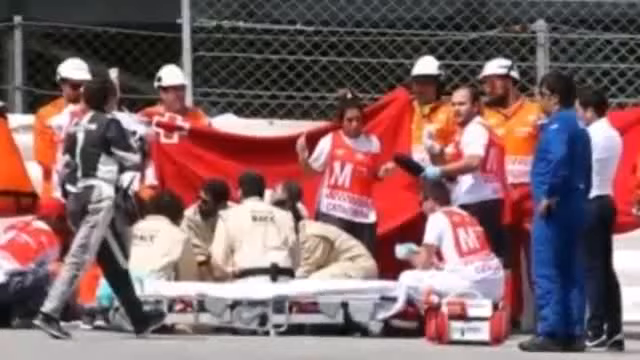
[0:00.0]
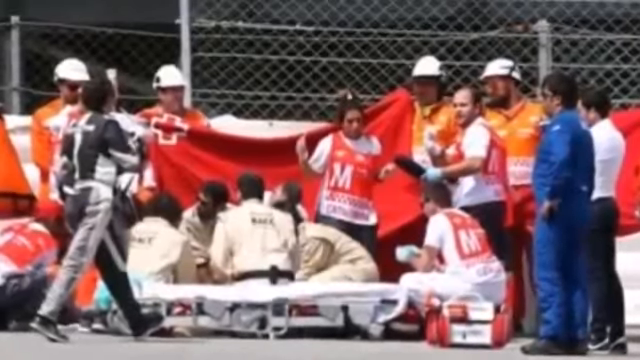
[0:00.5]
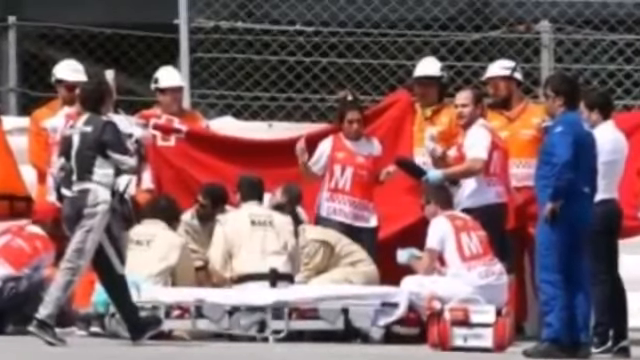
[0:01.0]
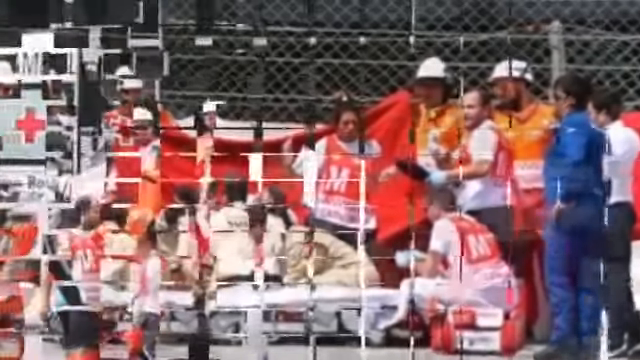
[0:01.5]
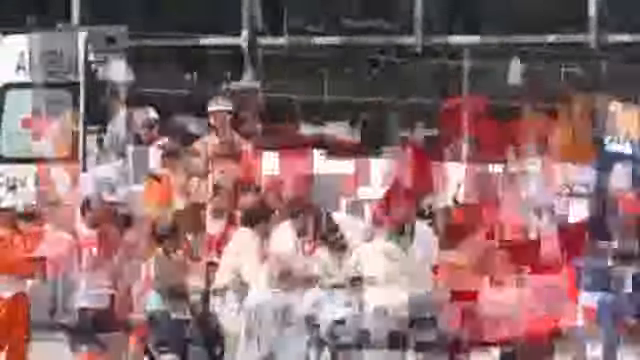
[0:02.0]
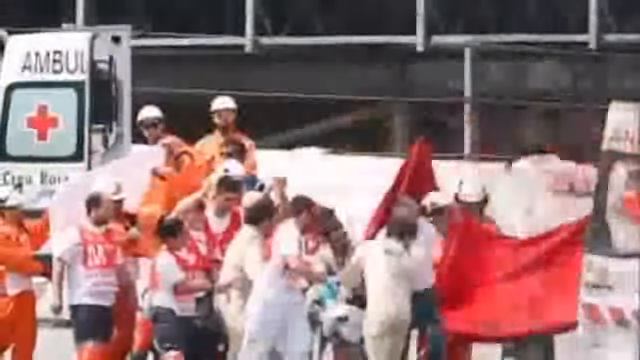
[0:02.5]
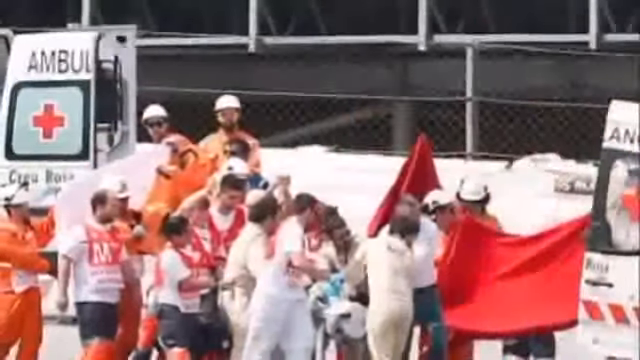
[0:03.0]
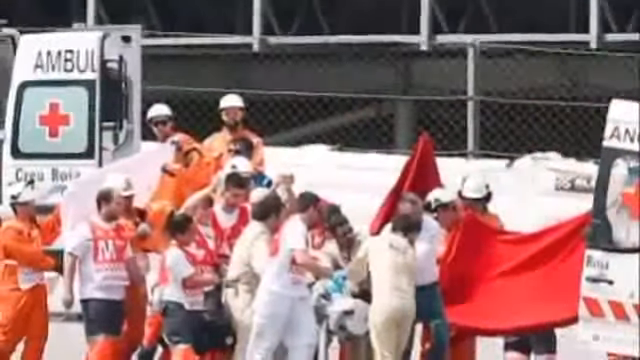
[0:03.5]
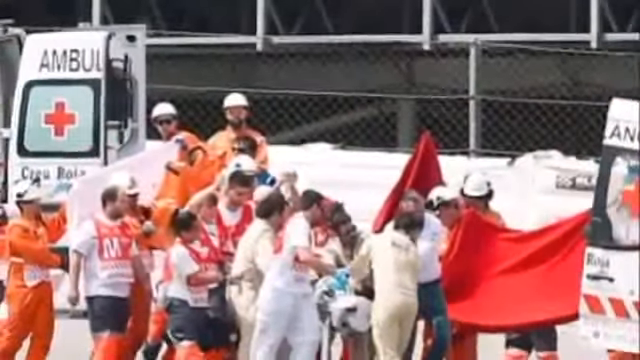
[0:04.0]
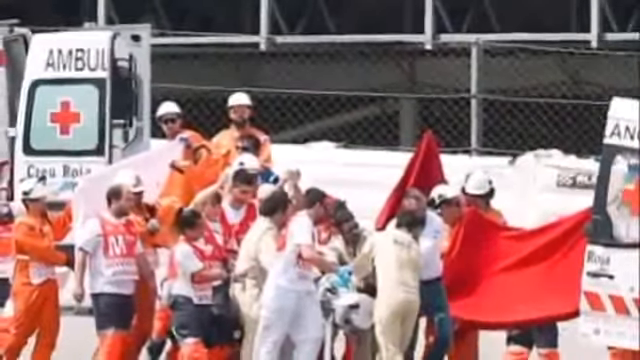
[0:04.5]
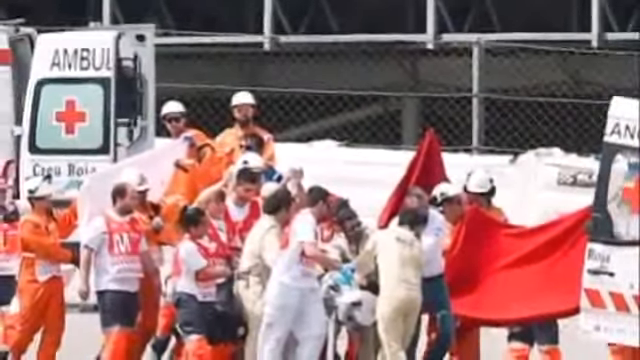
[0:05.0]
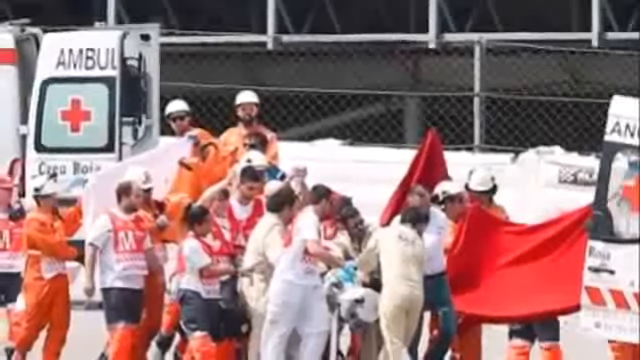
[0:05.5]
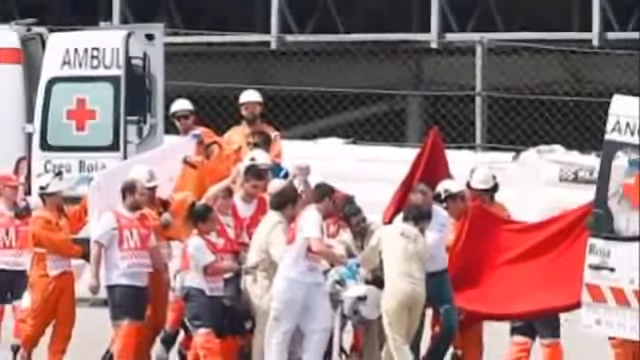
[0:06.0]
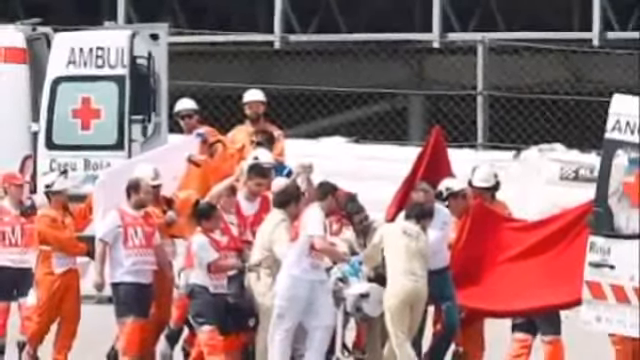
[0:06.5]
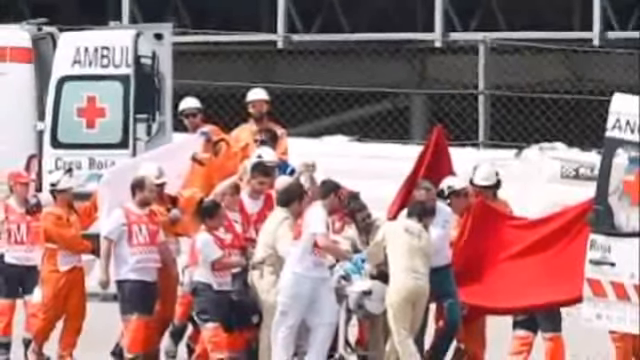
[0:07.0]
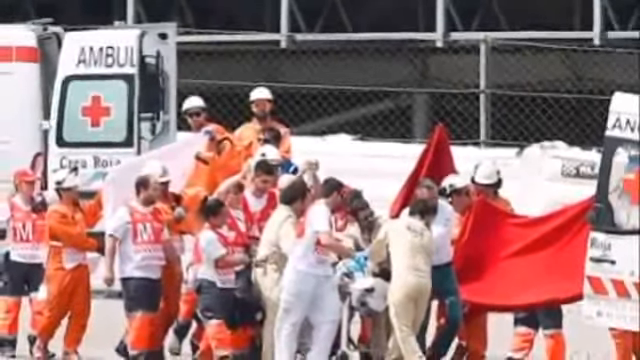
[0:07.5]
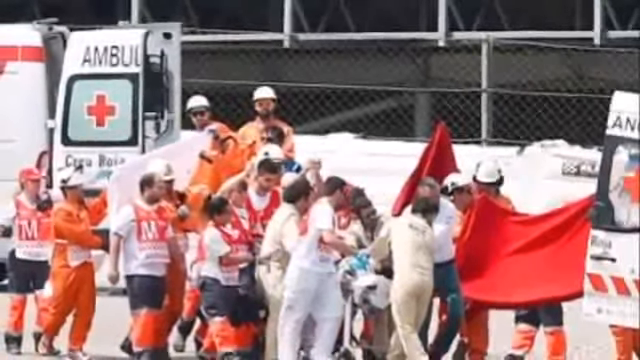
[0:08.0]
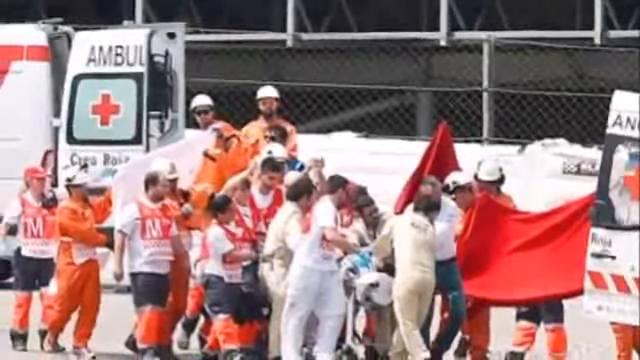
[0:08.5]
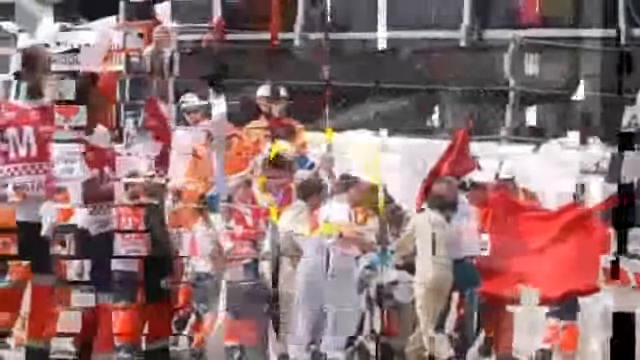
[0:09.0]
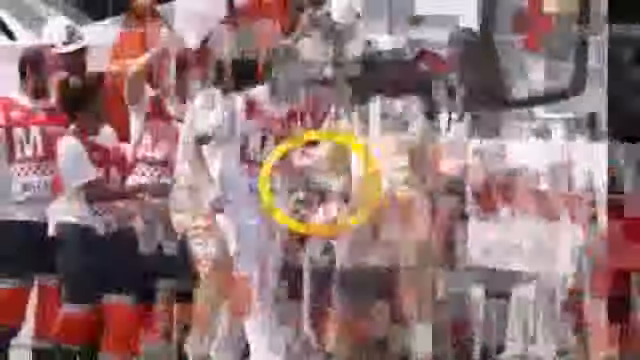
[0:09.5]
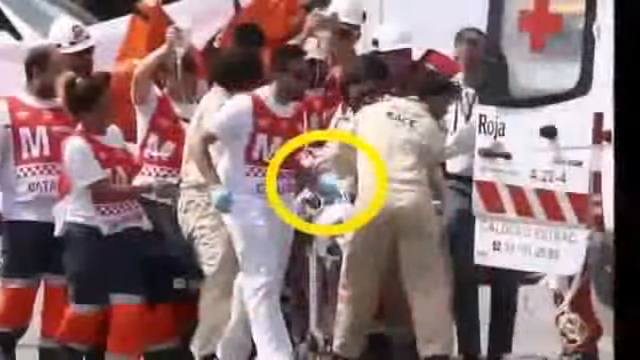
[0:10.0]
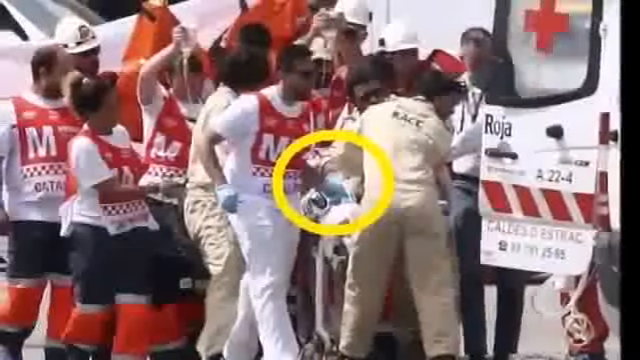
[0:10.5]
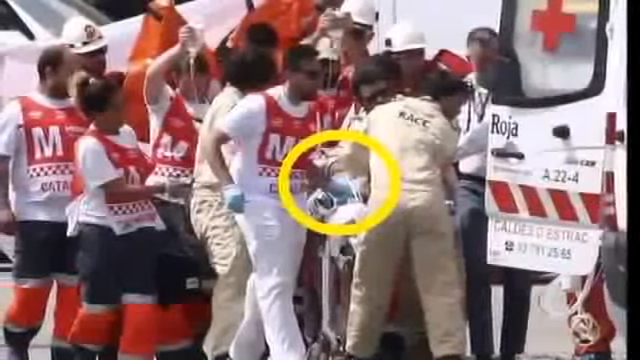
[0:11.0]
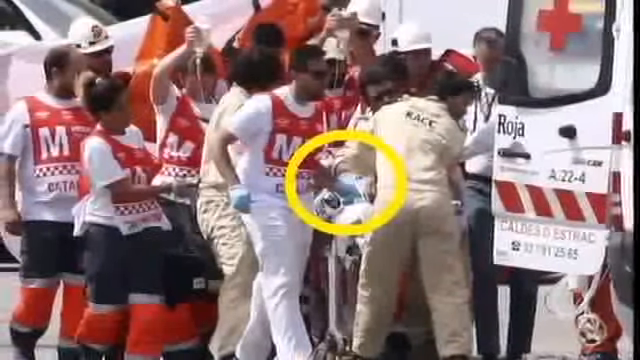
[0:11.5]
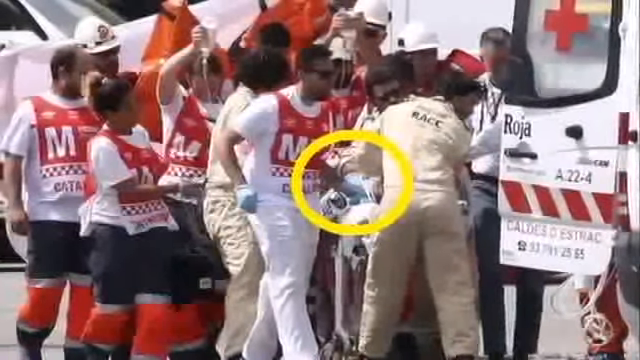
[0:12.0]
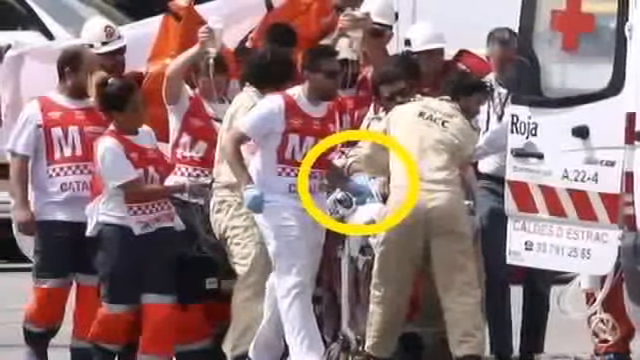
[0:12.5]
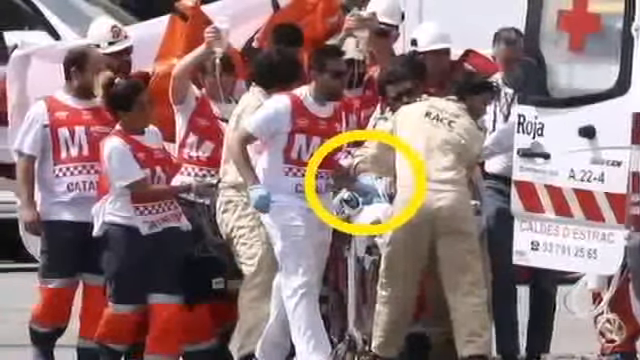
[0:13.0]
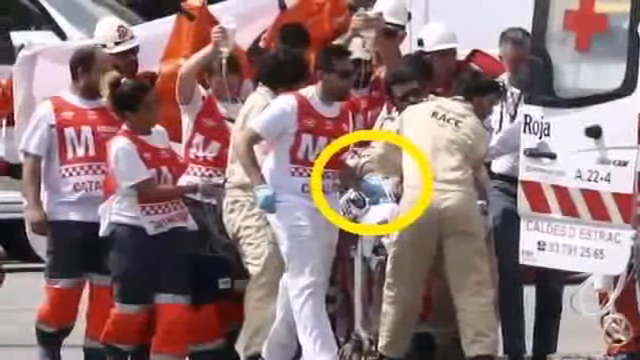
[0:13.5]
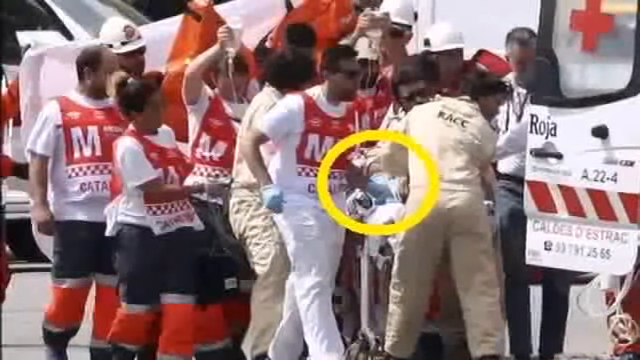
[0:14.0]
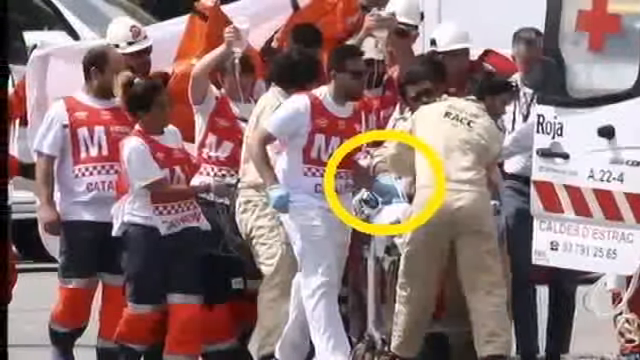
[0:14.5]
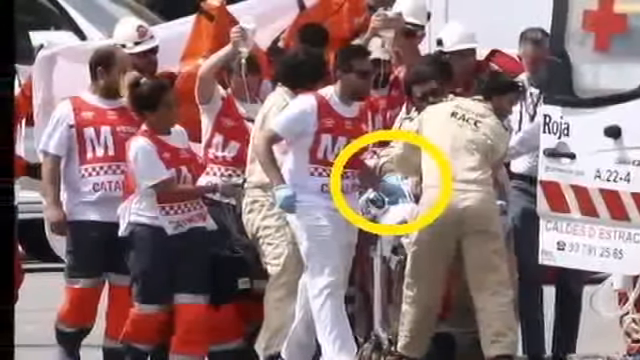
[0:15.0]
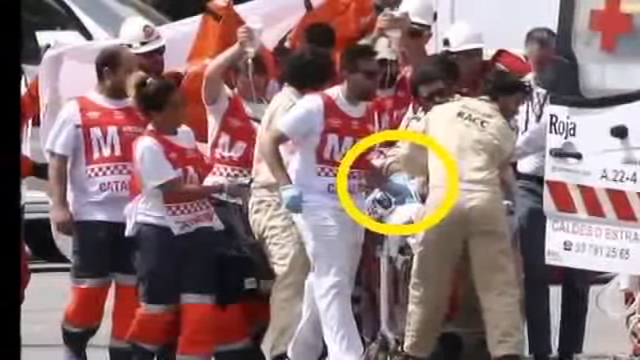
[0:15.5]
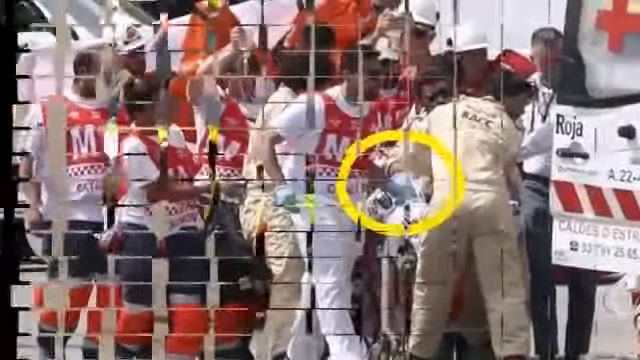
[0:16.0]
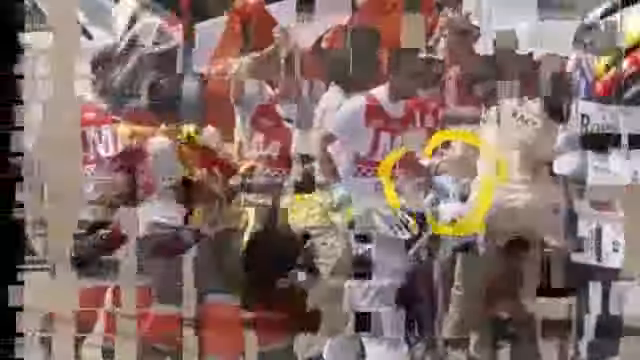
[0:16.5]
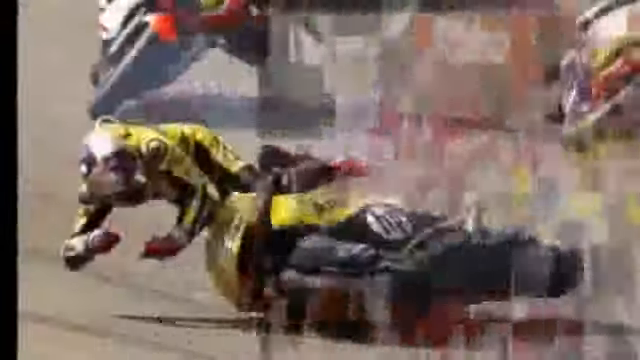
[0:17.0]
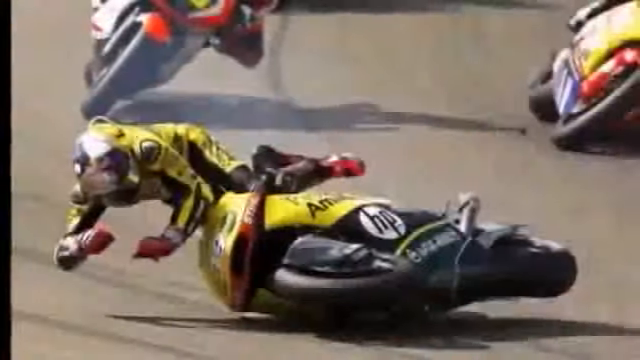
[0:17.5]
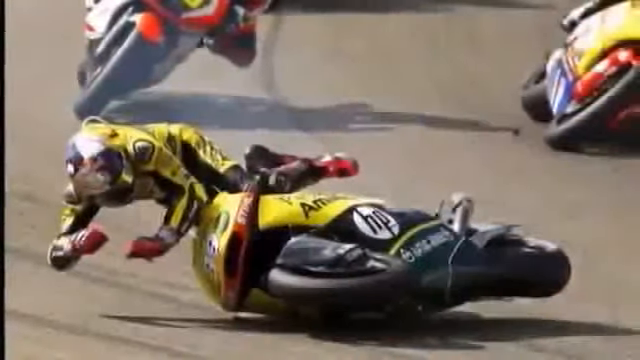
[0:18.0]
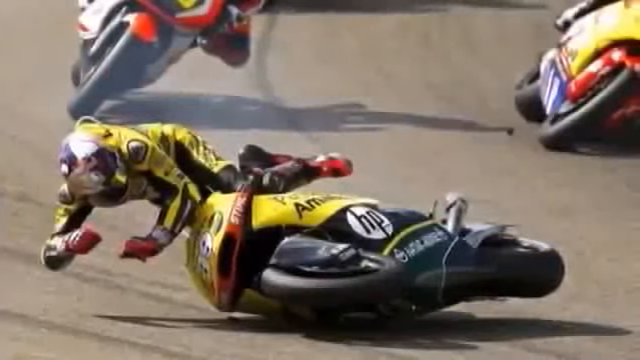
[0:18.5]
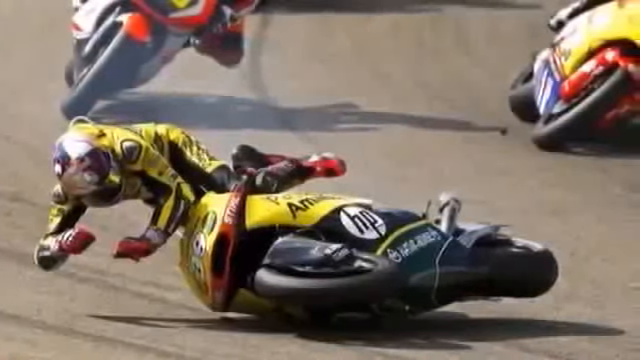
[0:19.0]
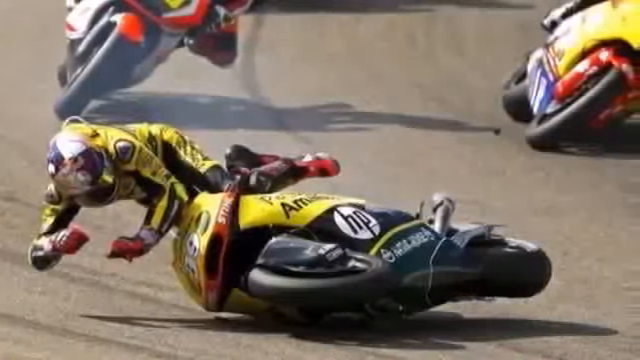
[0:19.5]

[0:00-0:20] The video opens on a still image of what looks like a racetrack, where there appears to be a major accident: an ambulance and medical personnel are on screen. Emergency workers, possibly construction workers, in orange with hard hats are present, and a team of people works on a person who appears to be on a stretcher. There are several cuts, some sort of frame cut, jump cut or blur cut. Medical personnel dressed all in white with red vests help the person into the ambulance. A circle comes onto the screen, seemingly highlighting the injured person, who is on a gurney to be put into the ambulance. Next comes an image of a crash, presumably the one that caused the injuries: a person on a motorbike that has turned over to the side, bracing for a fall with his arms out in front of him. The motorbike is yellow and black with "HP" on it. The rider wears a yellow and black suit, red boots, red gloves and a sort of blue and white helmet.